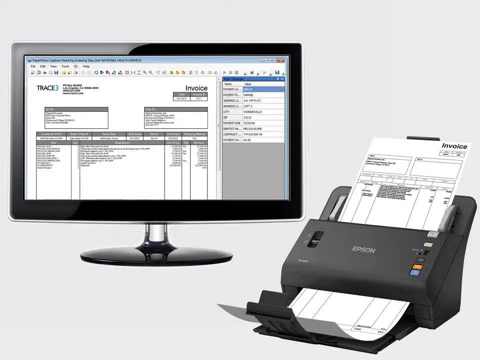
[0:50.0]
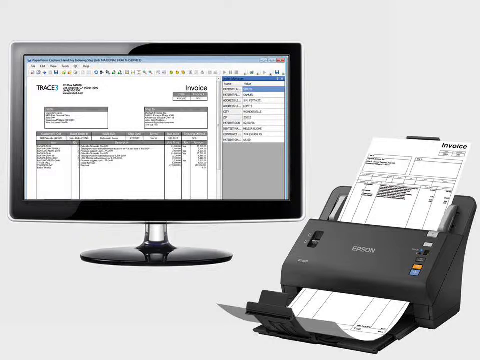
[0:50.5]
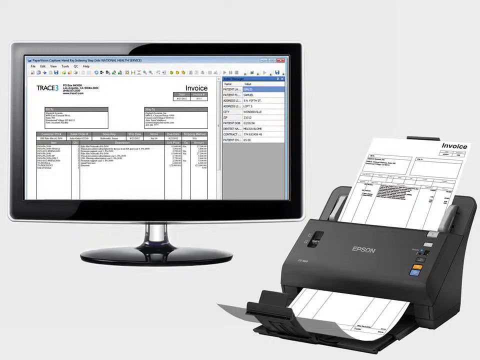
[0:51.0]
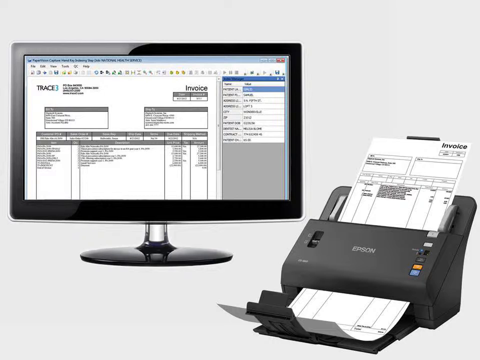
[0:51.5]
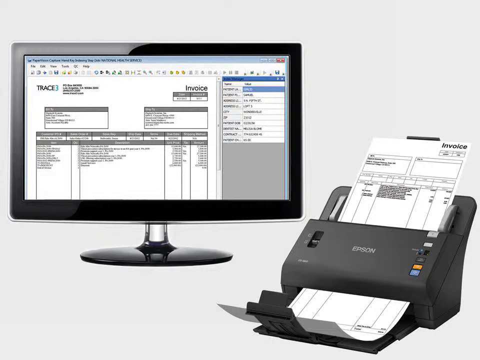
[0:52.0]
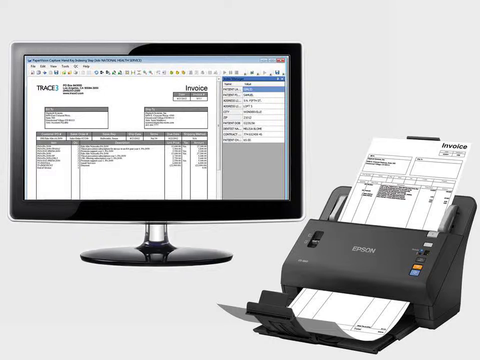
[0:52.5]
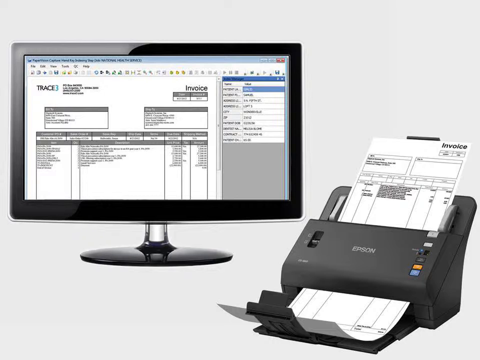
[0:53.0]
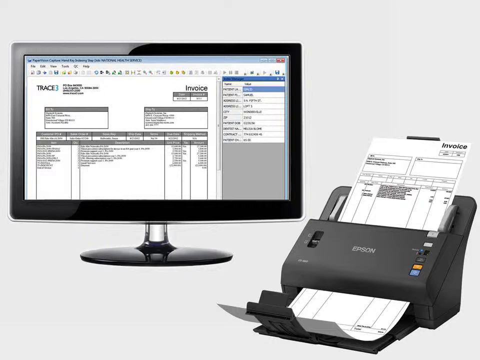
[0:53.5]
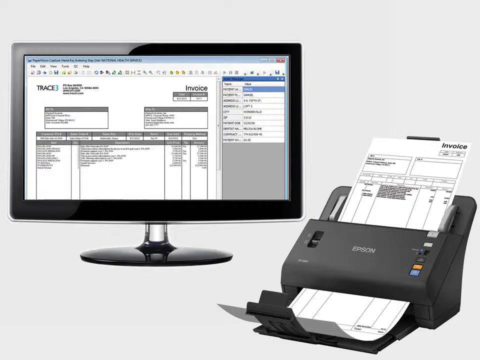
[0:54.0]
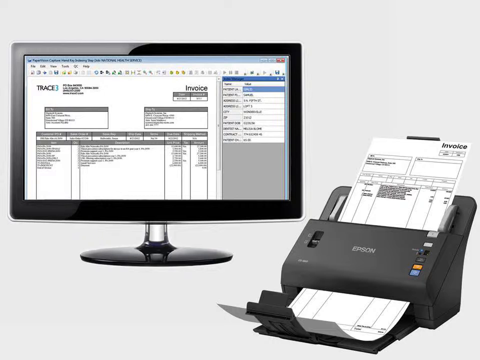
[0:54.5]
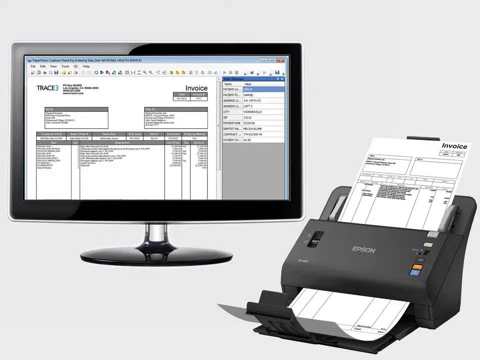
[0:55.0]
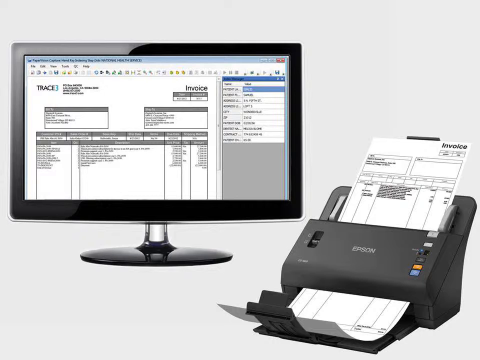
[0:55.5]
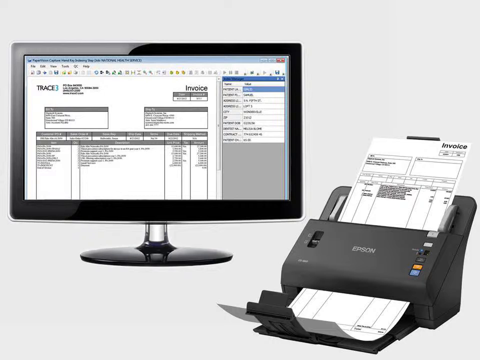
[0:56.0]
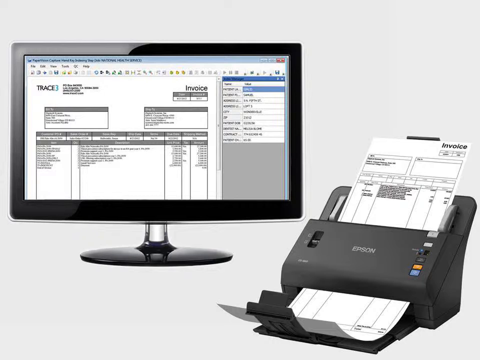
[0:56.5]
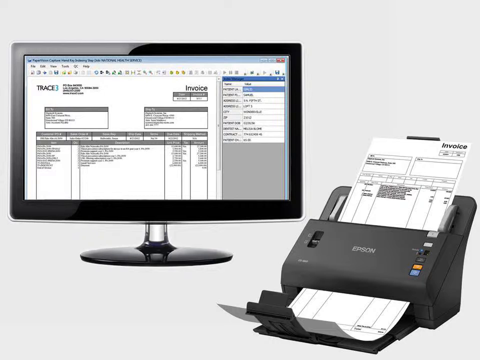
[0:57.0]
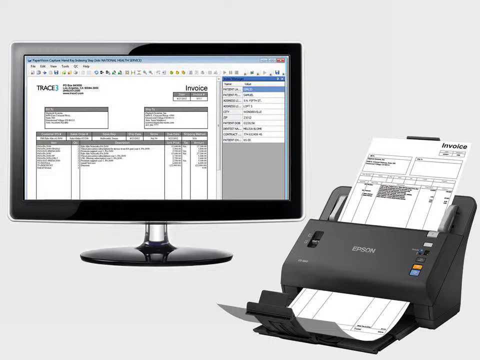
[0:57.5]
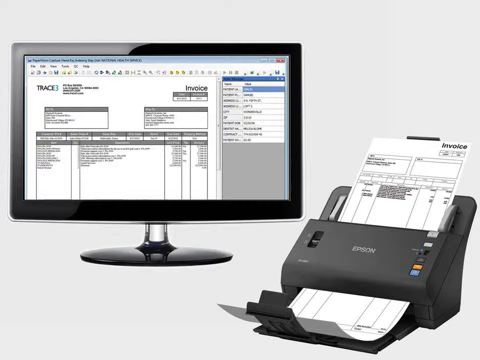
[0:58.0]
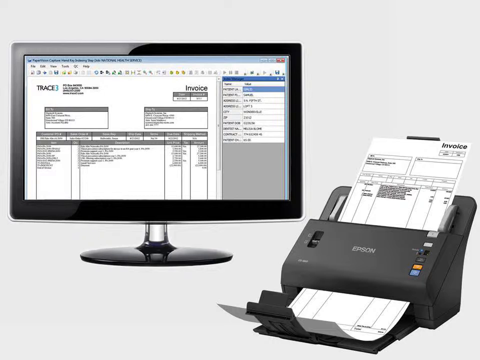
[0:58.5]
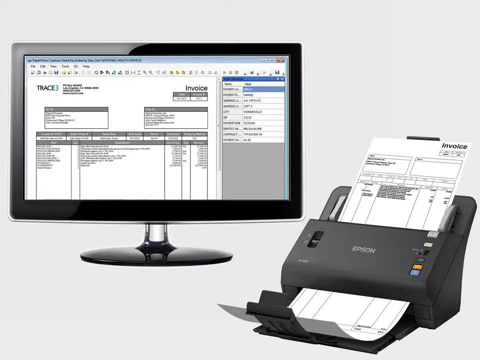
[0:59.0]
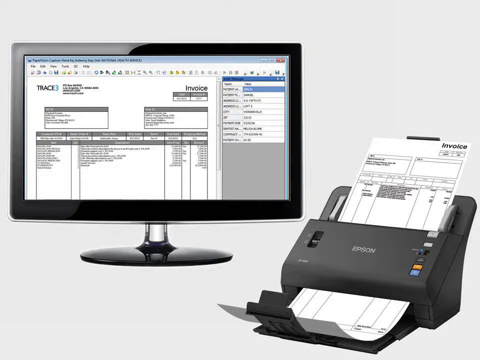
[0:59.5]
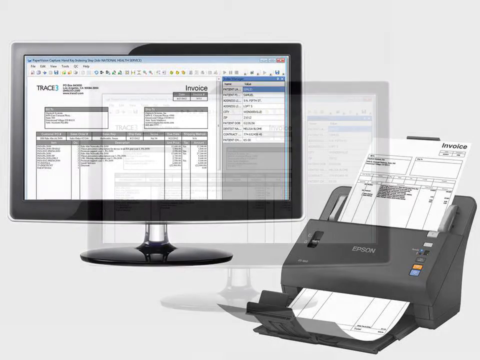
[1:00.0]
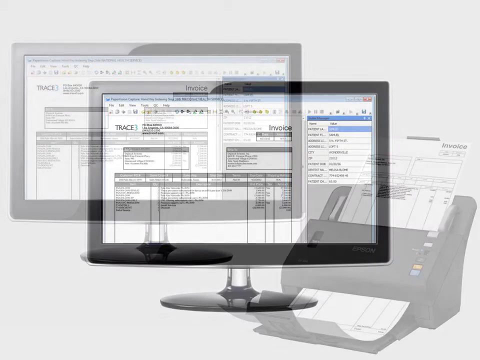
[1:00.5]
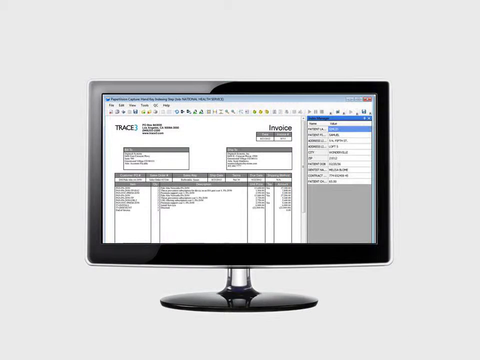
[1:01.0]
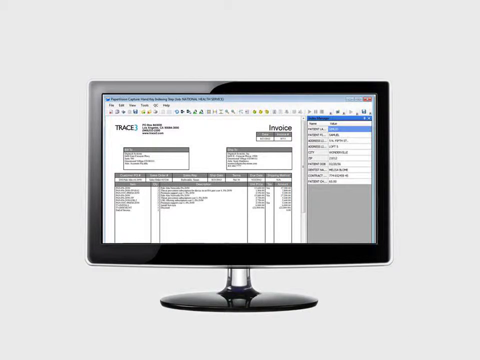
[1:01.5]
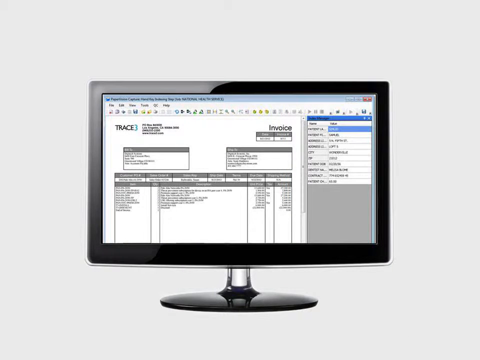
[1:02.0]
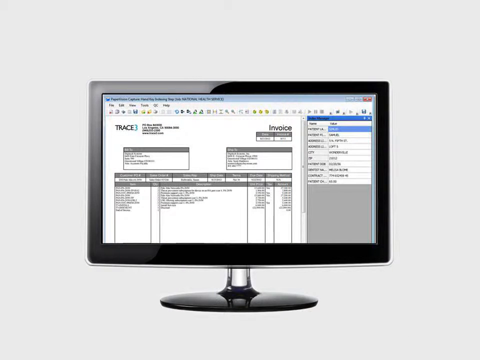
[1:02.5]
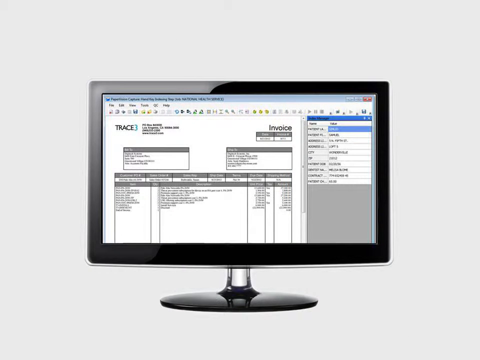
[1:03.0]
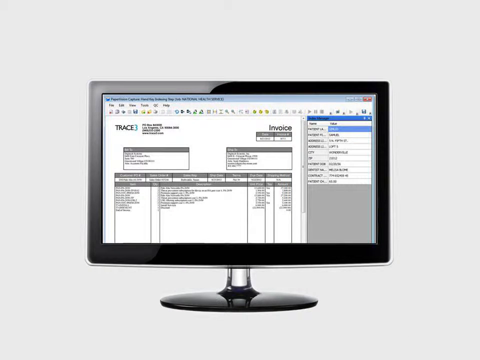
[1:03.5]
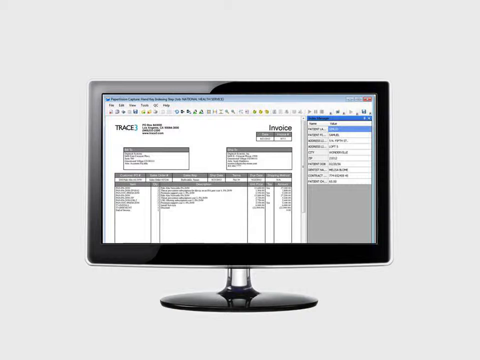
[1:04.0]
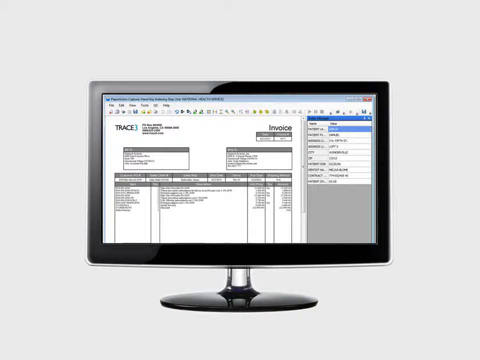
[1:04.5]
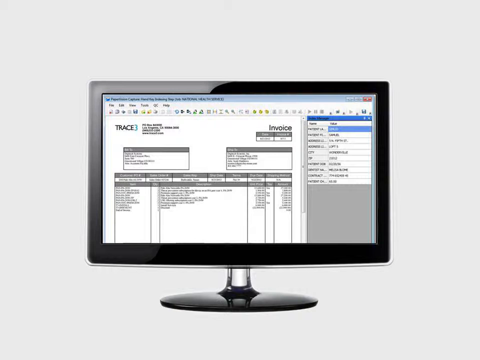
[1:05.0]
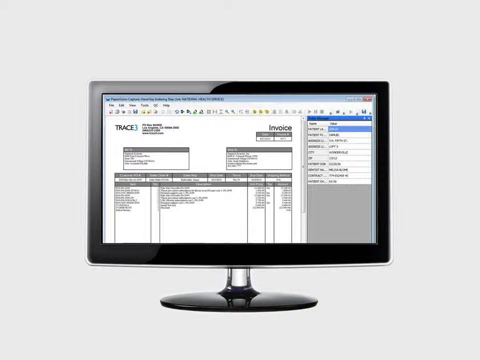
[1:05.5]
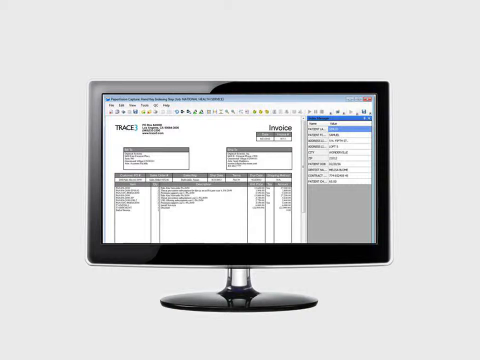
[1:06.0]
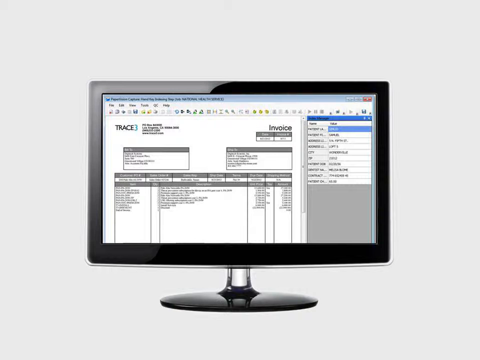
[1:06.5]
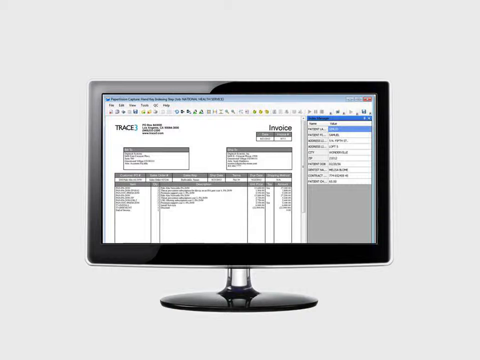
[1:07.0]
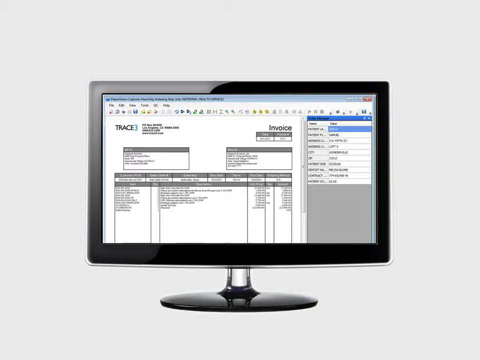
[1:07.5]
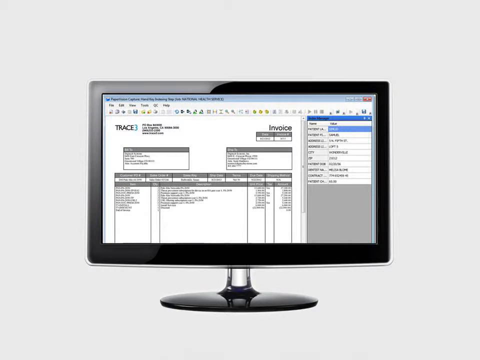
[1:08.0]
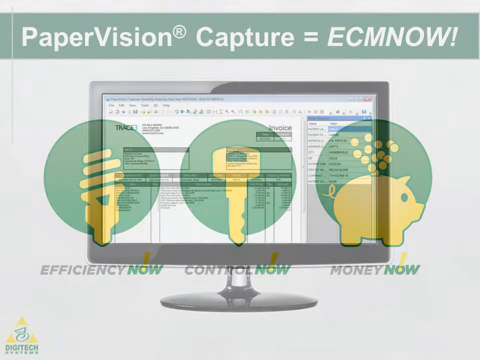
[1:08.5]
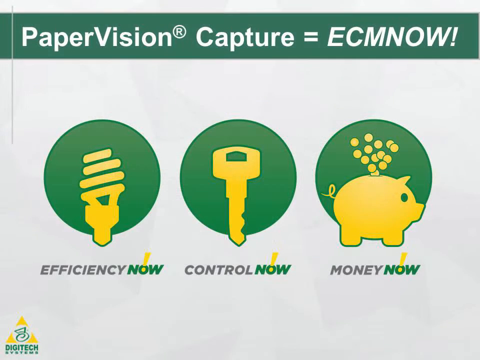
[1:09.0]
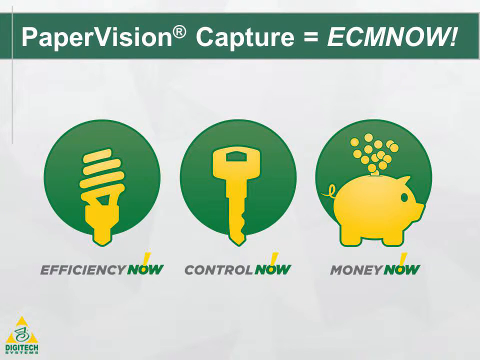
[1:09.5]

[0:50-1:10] A computer monitor is in the top left corner of the screen, with a black frame and black base, while the stick from the base into the back of the monitor is kind of clear-looking, apparently plastic. The software program on the monitor shows an invoice, with "invoice" in black text at its top right corner and "trace three" in black text at its top left corner, except that the three is green. In the bottom right corner of the screen is an Epson printer with an invoice loaded in the top, which looks like it is printing out a copy at the bottom. The video then switches to a single view of the monitor in the center of the screen. Next, it switches to a white background with green, with the text "Efficiency Now", "Control Now" and "Money Now" at the bottom under three small logos or icons: a light bulb over "Efficiency Now", a key over "Control Now", and a piggy bank over "Money Now", with change that looks like it is being put inside it. All the icons are yellow, overlaid on green circles.